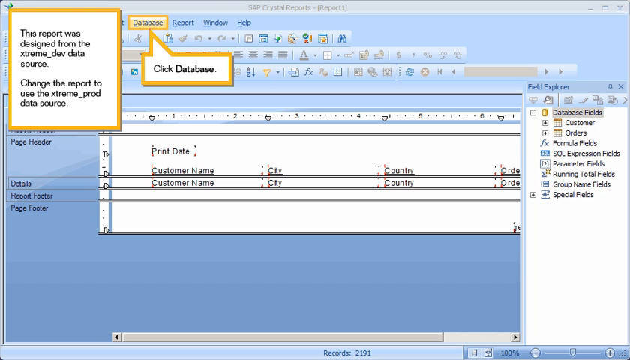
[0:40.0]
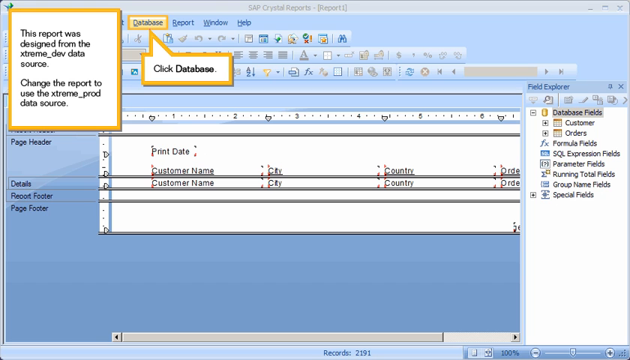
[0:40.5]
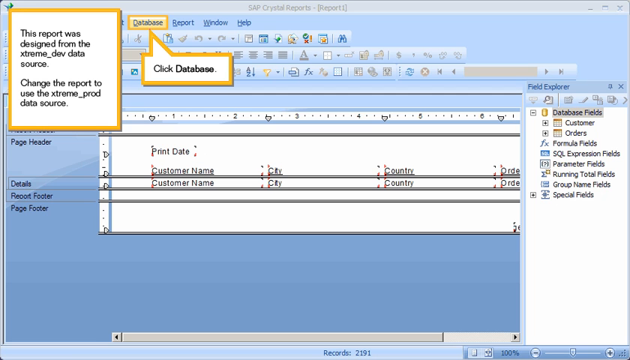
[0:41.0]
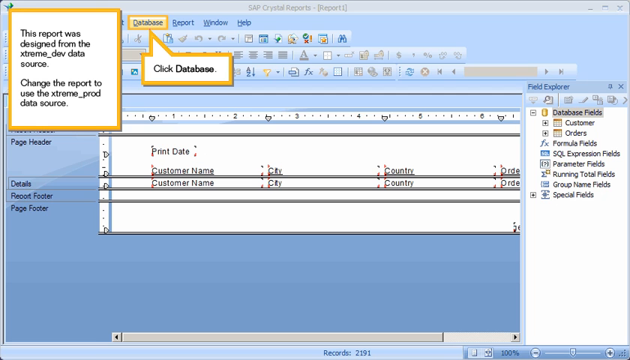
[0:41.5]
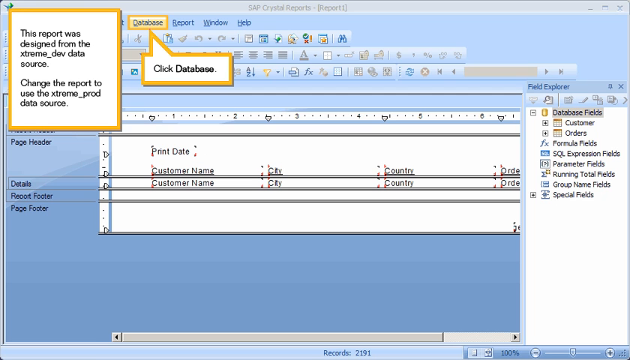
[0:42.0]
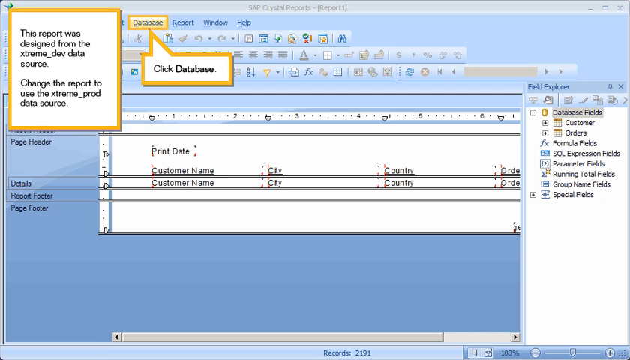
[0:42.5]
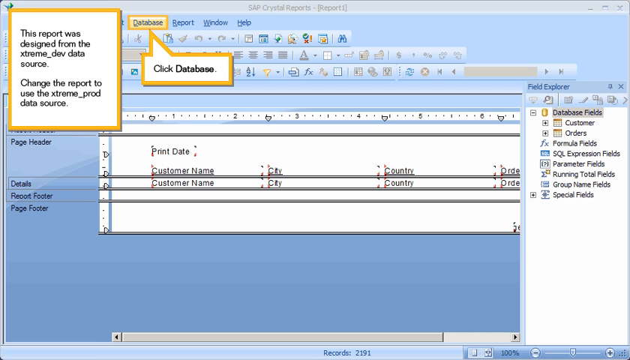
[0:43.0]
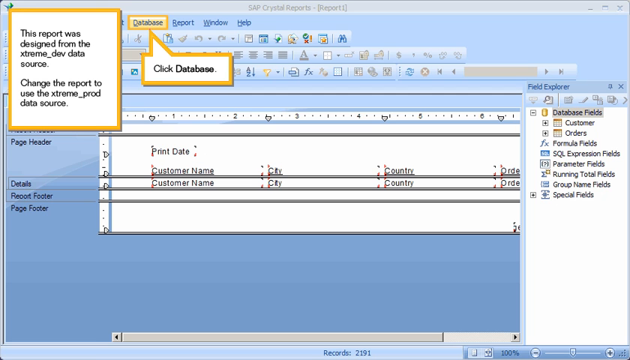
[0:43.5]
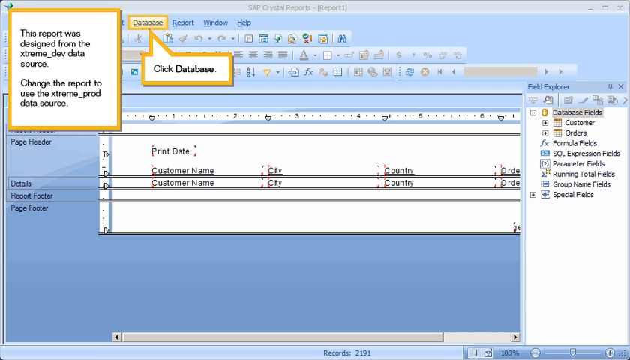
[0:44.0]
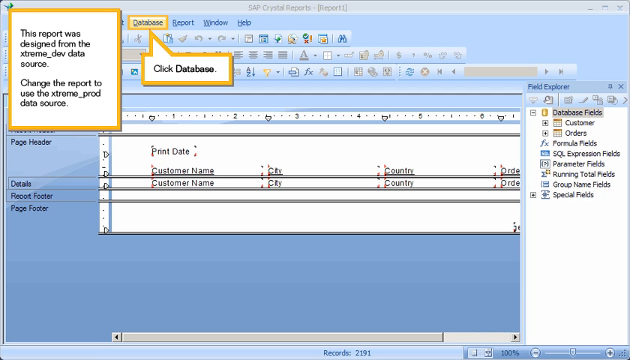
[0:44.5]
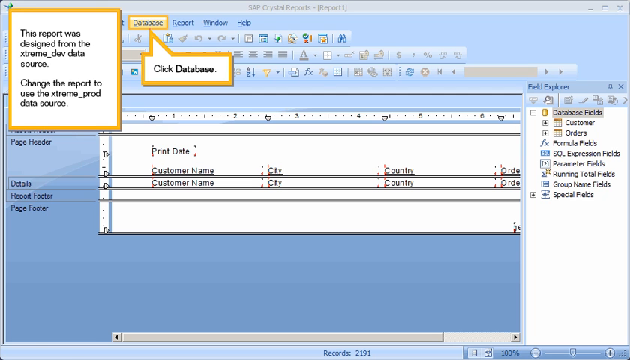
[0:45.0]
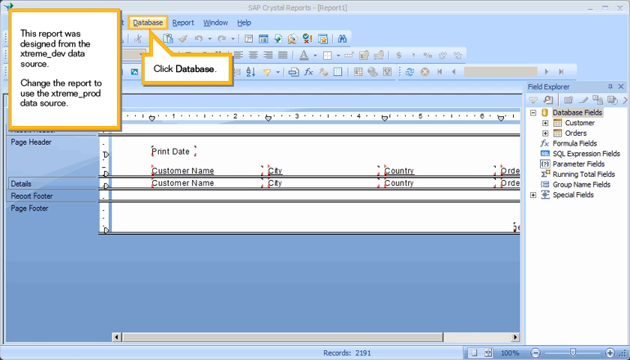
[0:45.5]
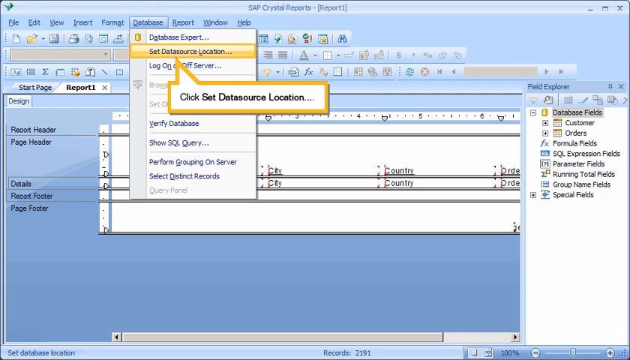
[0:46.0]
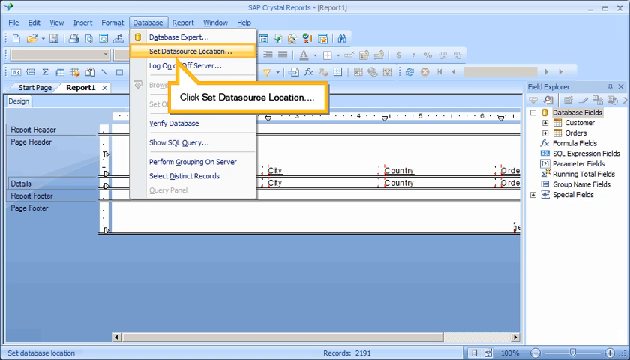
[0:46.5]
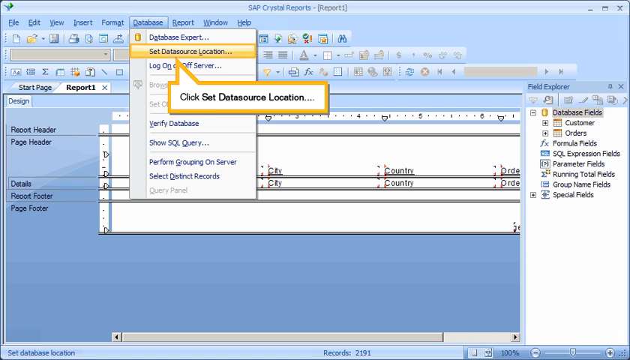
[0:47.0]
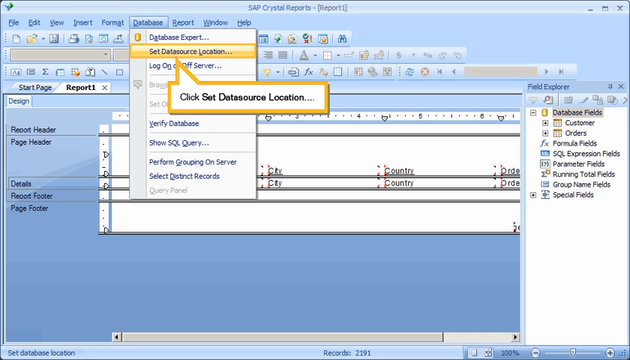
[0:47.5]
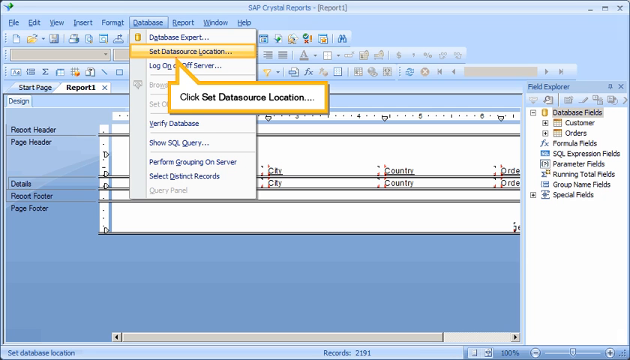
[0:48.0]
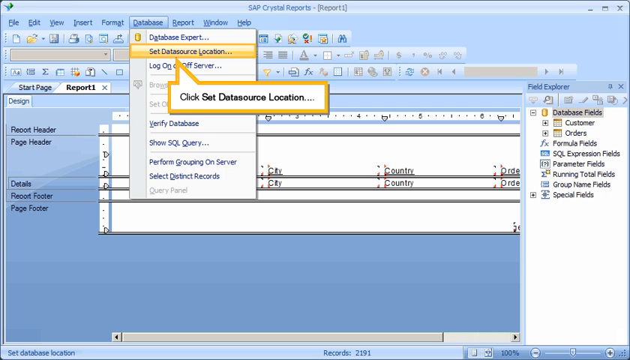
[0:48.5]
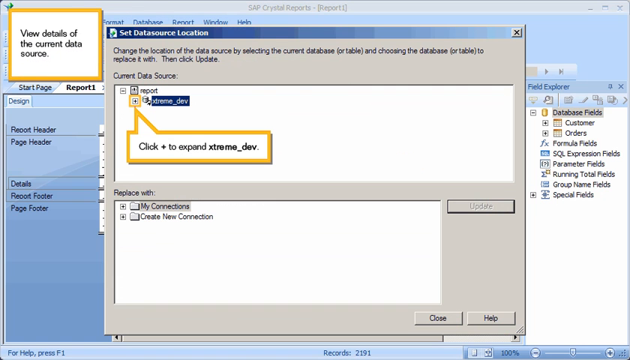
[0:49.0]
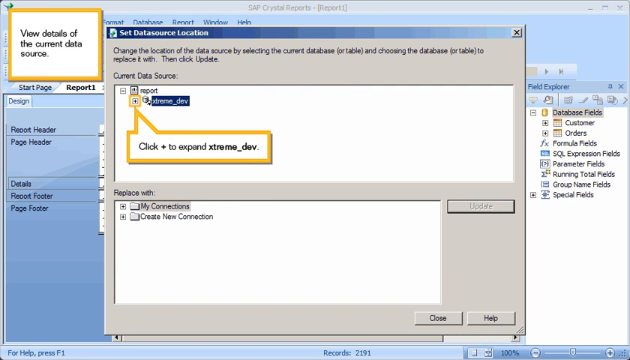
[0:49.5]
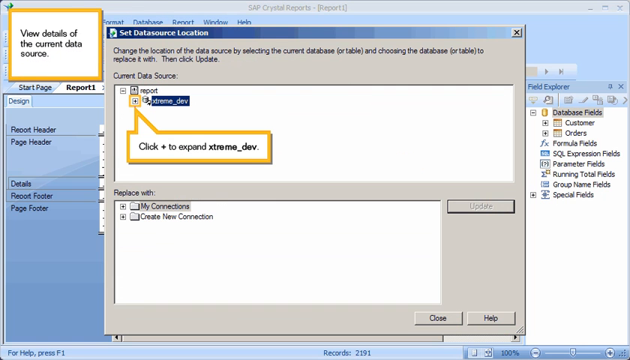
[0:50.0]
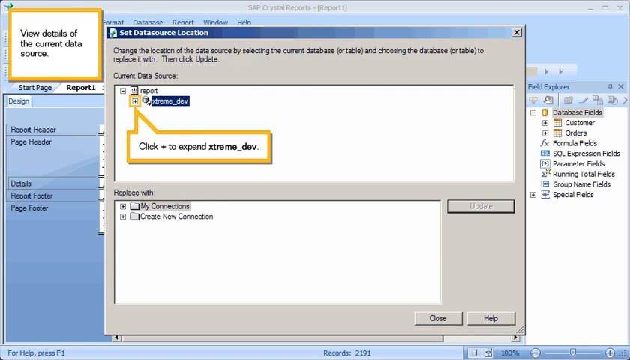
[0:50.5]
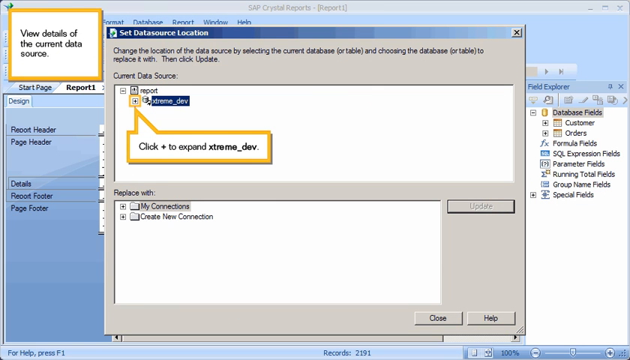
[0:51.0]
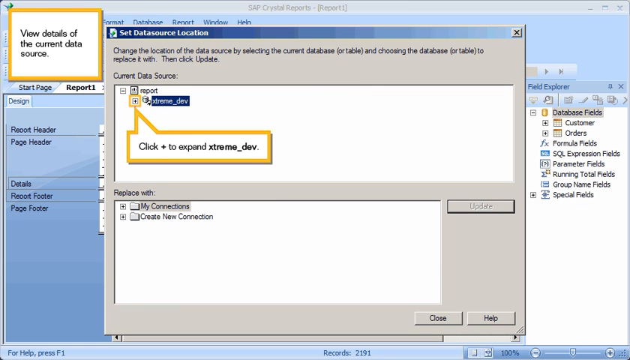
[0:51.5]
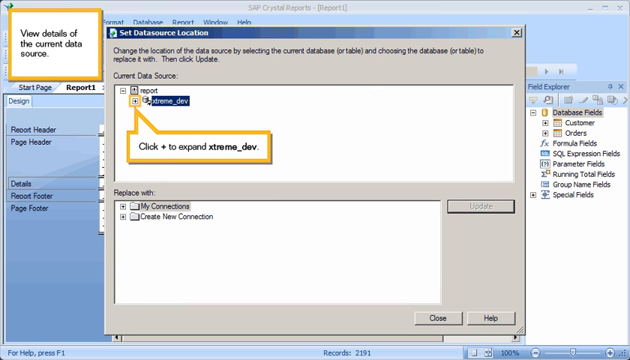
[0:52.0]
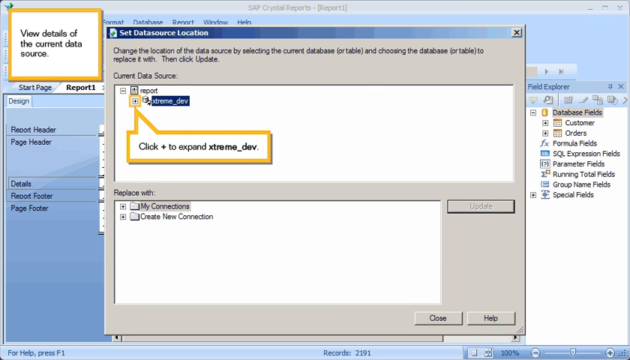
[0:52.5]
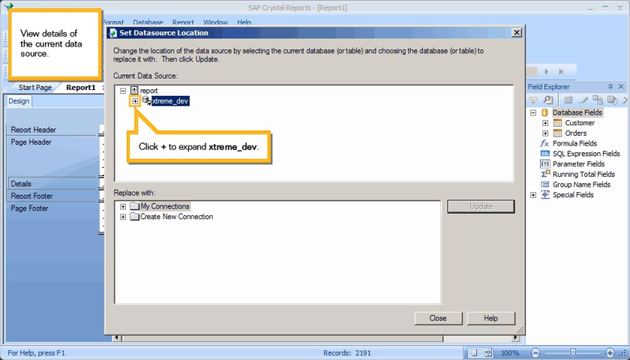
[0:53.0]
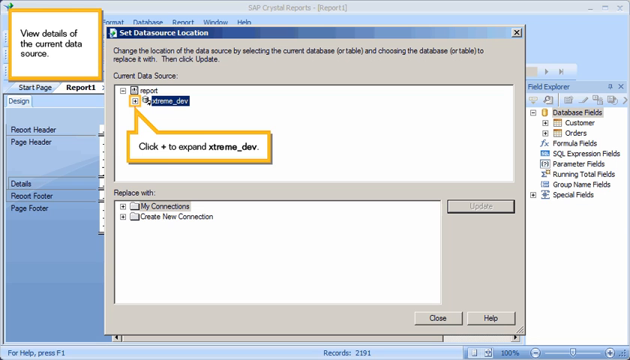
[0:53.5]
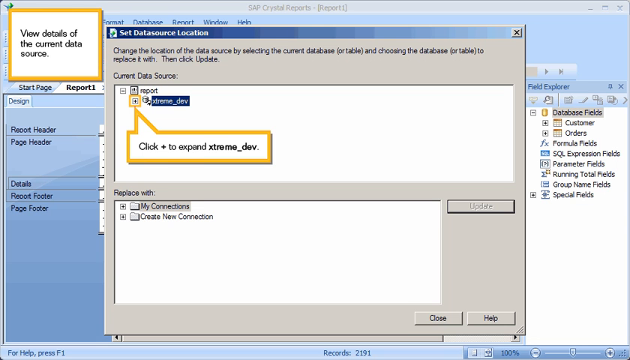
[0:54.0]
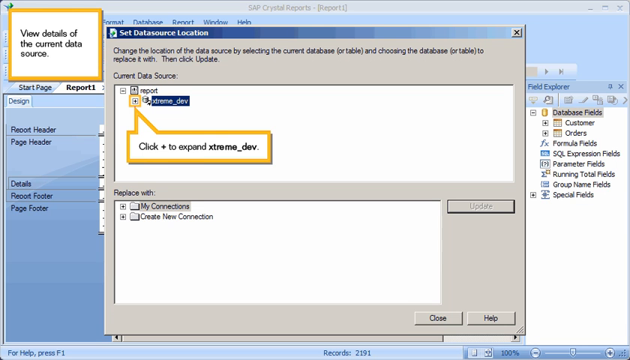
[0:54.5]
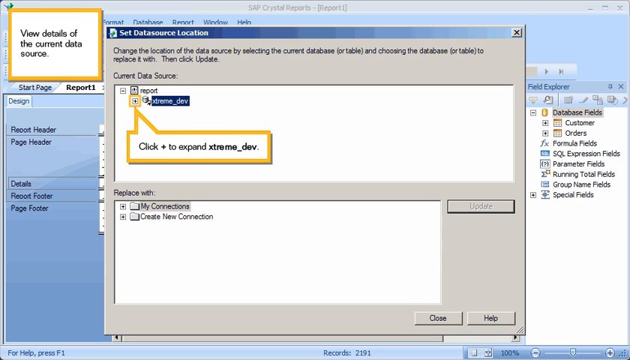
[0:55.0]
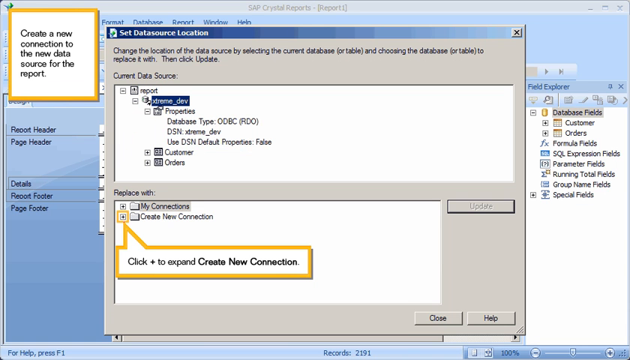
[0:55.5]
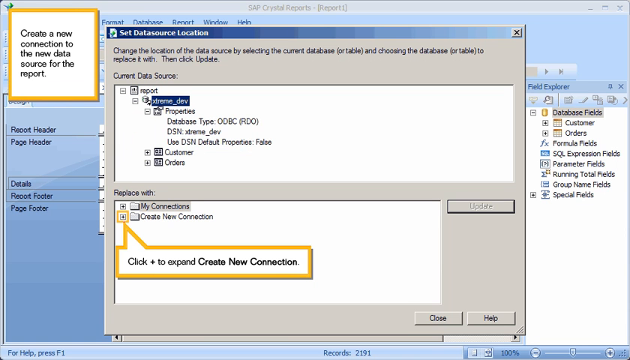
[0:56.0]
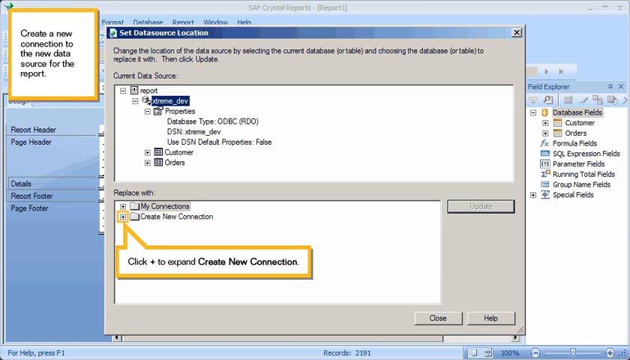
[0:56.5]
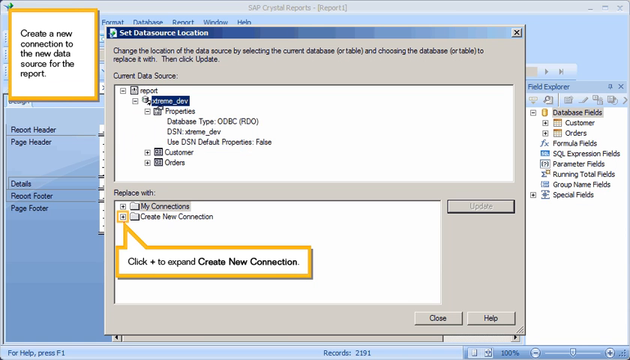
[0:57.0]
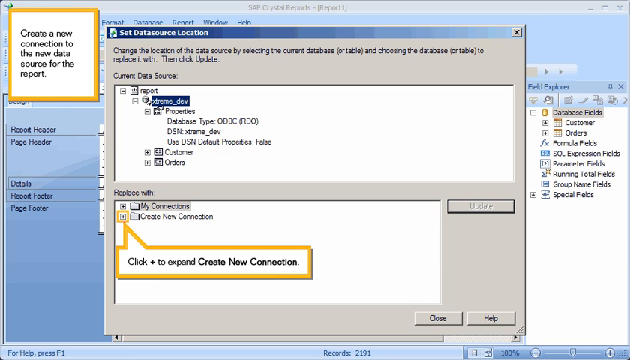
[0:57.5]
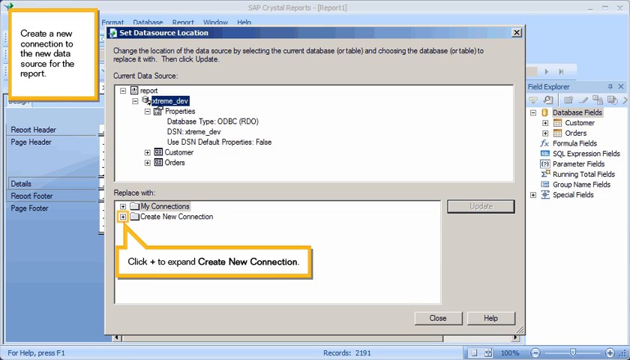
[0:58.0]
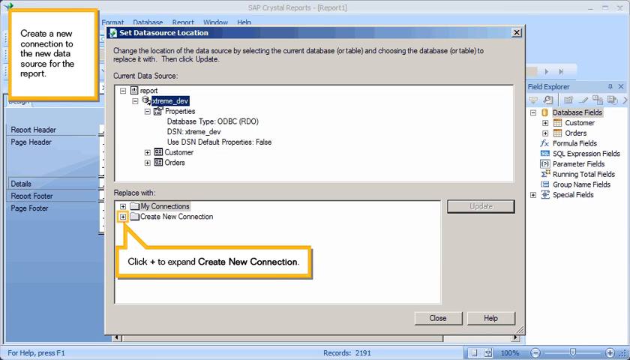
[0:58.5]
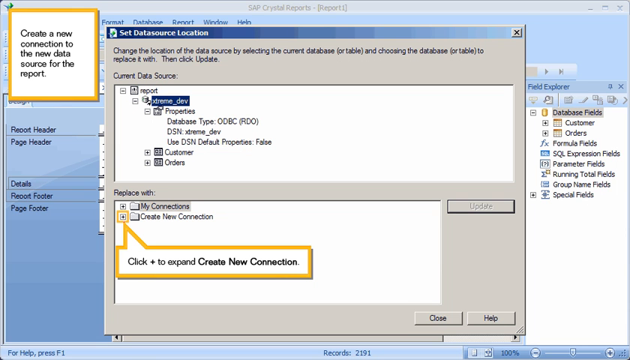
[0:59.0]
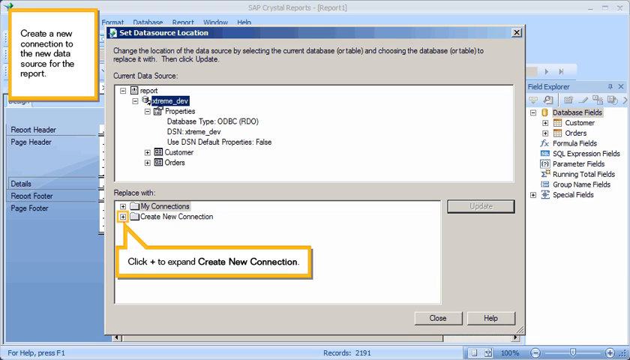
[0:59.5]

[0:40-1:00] The computer program remains open with a blue background and a white text box for inputting data in the center. In the upper left-hand corner, a white box framed in yellow says "this report was designed from the Xtreme Dev data source. Change the report to use the Xtreme Prod data source." Another white text box framed in yellow says "click database." On the right-hand side, a vertical white text box lists further information in the program: database fields, customer, orders, formula fields, expression fields, parameter fields, running total fields, group name fields, and special fields. The mouse moves and clicks, and the box changes to "click set data source location." Once that click happens, the screen changes to a computer dialog box framed in gray showing "report" and "extreme dev." The dialog box then says "click to expand extreme dev," and then "click to expand to create new connection."